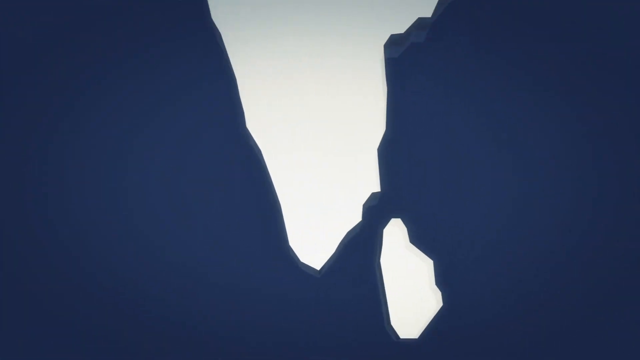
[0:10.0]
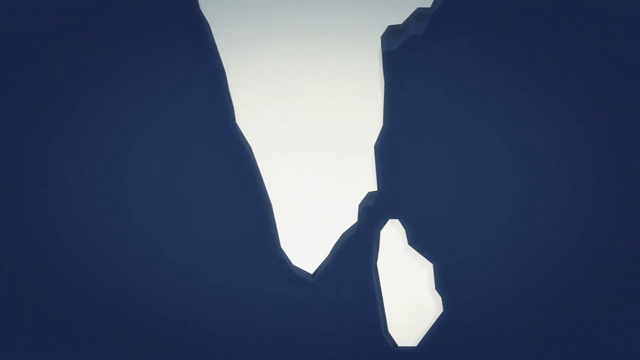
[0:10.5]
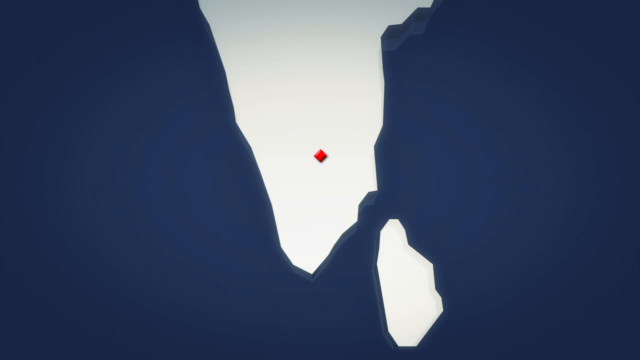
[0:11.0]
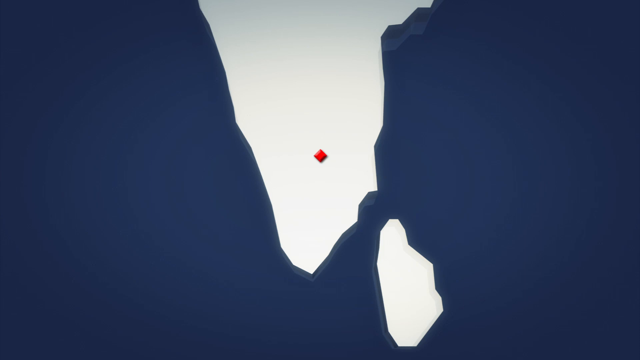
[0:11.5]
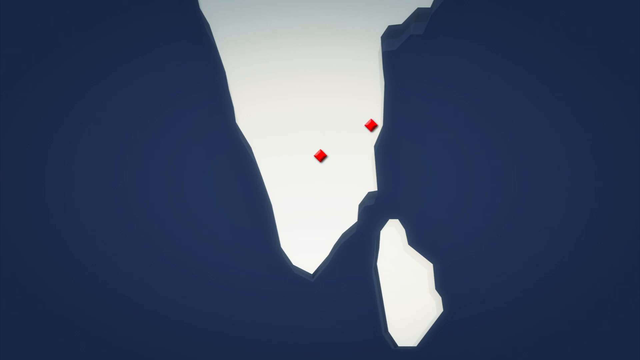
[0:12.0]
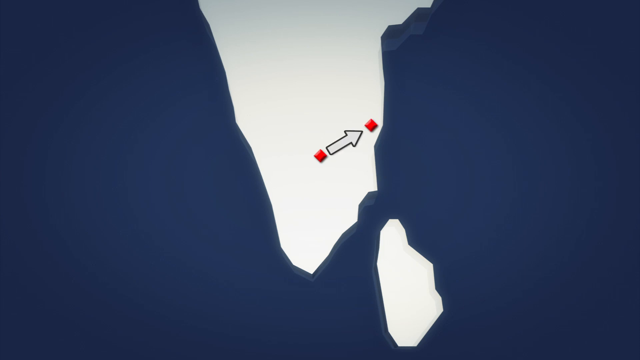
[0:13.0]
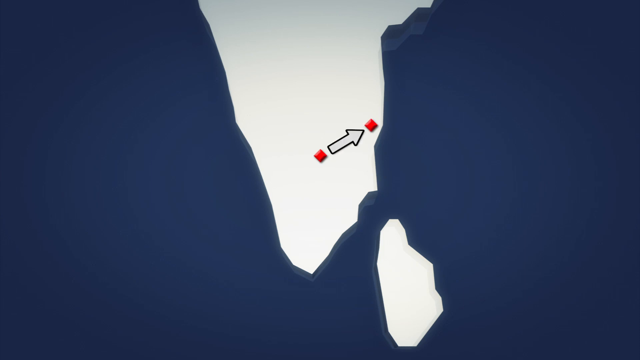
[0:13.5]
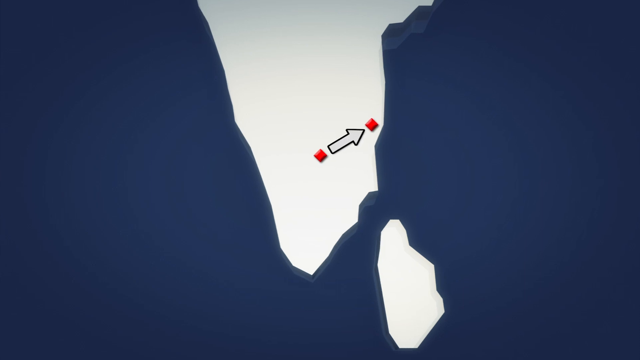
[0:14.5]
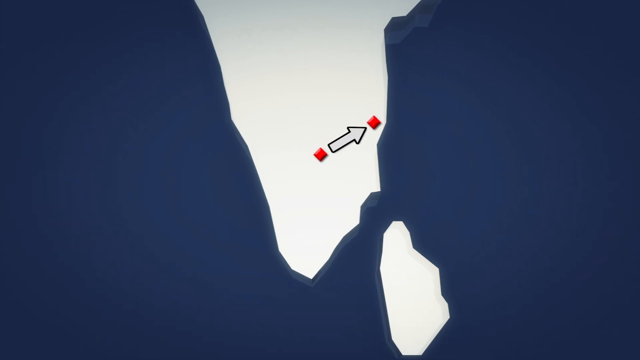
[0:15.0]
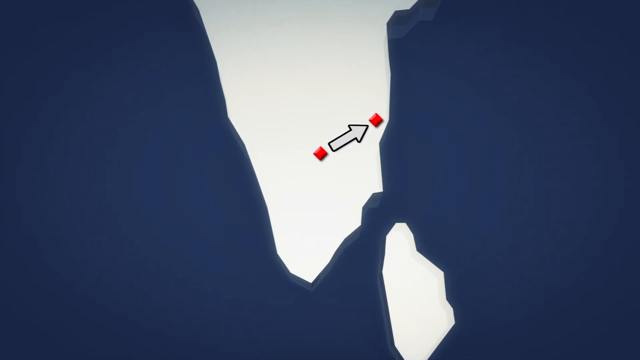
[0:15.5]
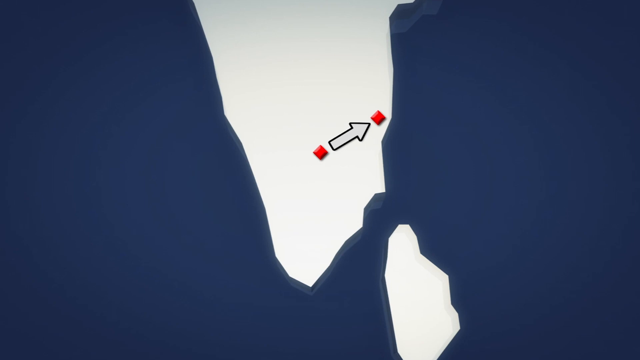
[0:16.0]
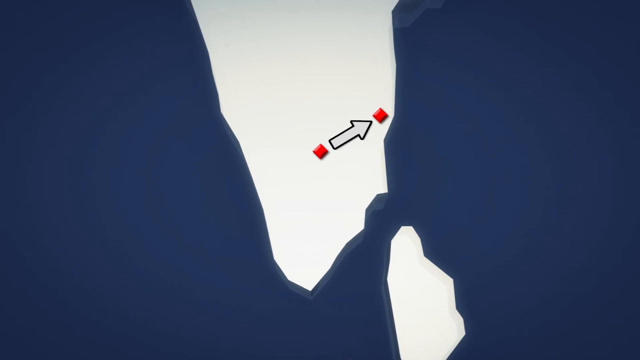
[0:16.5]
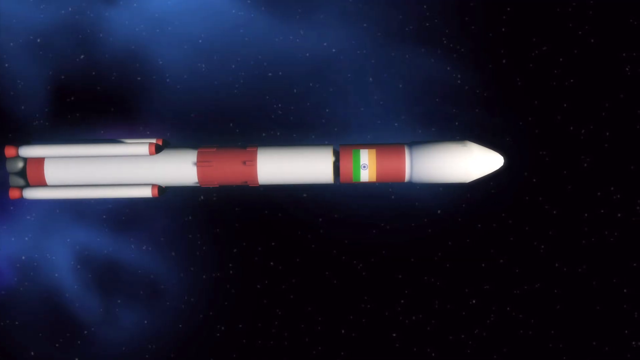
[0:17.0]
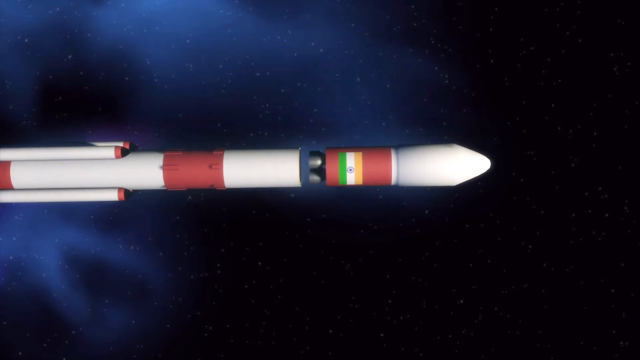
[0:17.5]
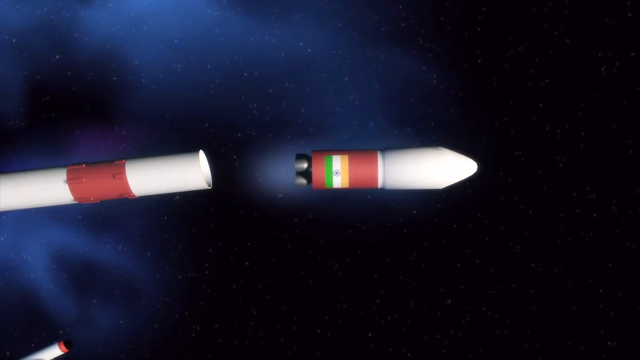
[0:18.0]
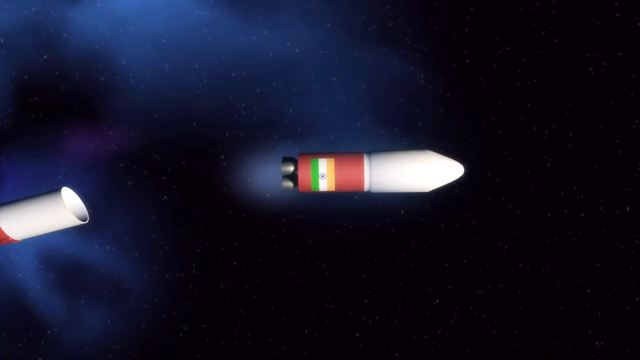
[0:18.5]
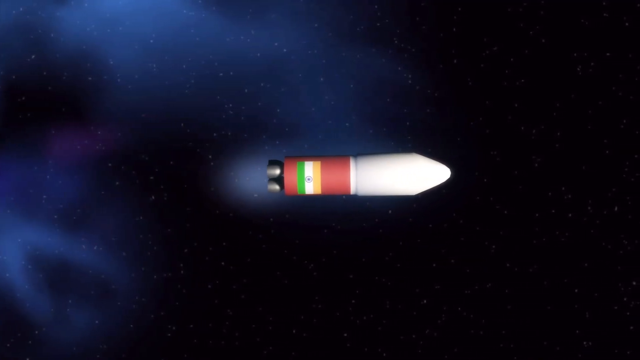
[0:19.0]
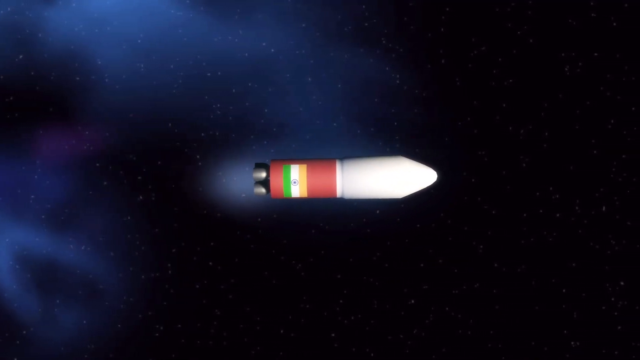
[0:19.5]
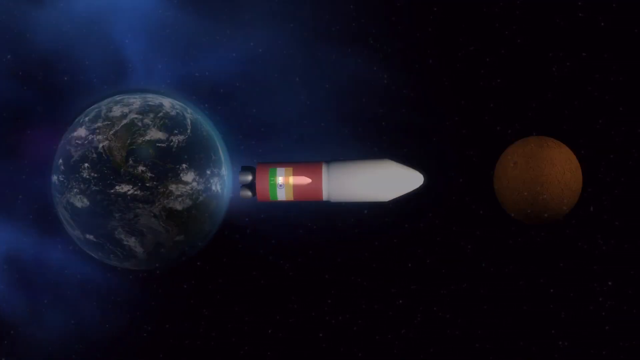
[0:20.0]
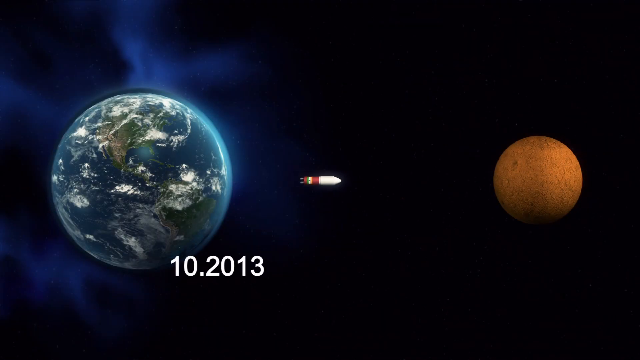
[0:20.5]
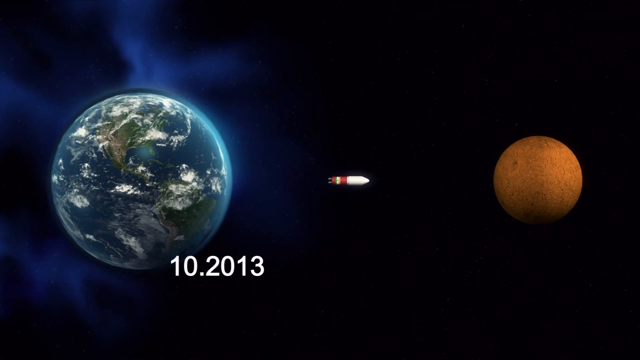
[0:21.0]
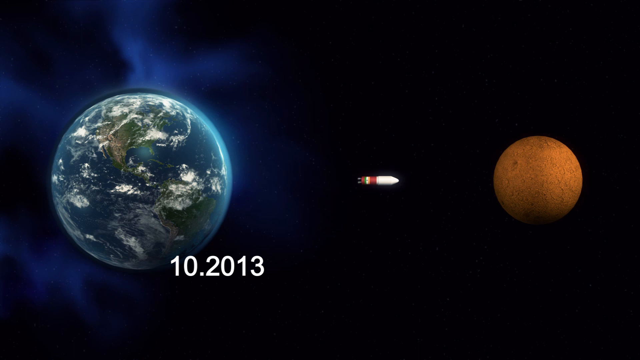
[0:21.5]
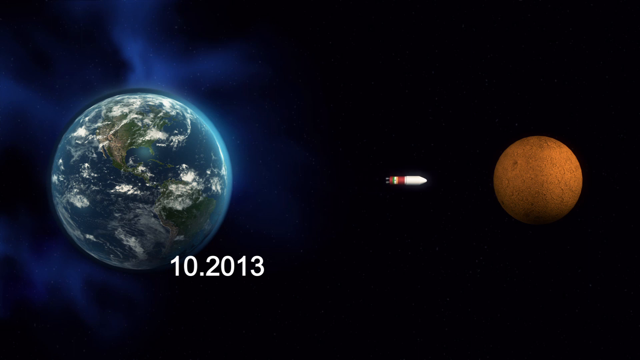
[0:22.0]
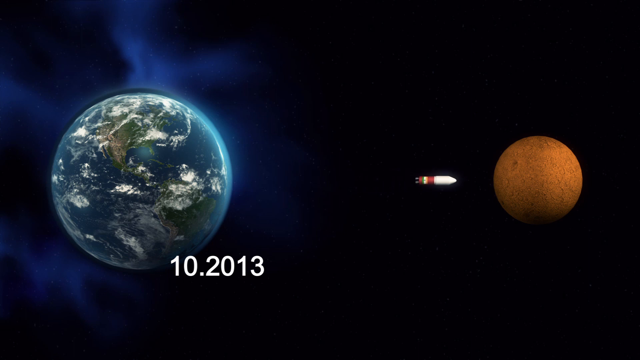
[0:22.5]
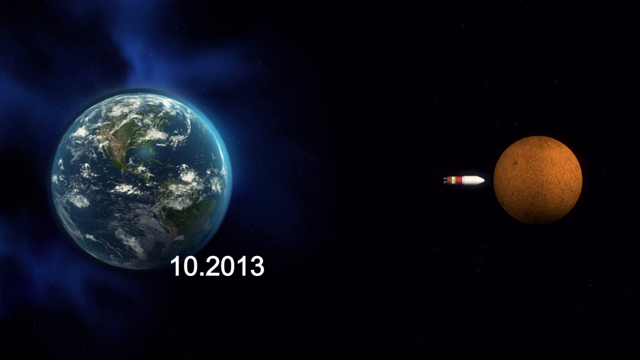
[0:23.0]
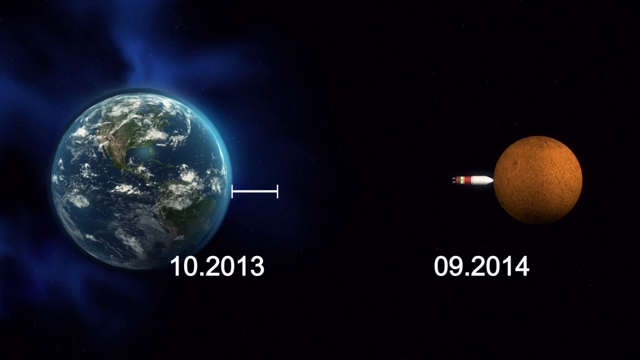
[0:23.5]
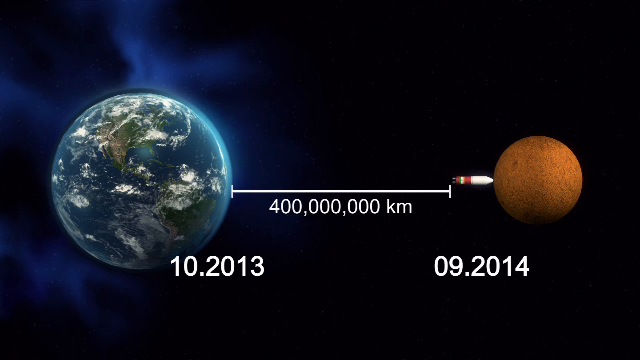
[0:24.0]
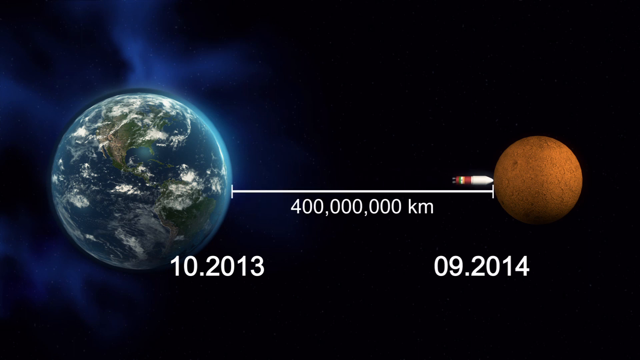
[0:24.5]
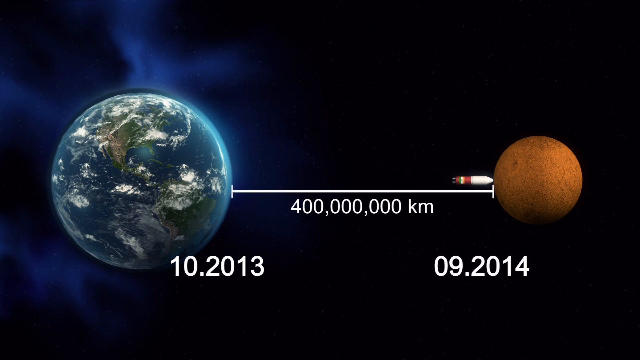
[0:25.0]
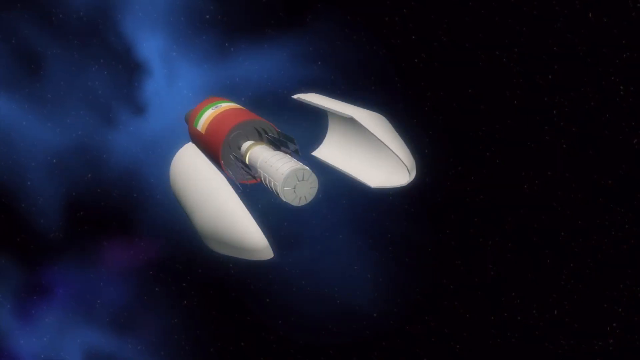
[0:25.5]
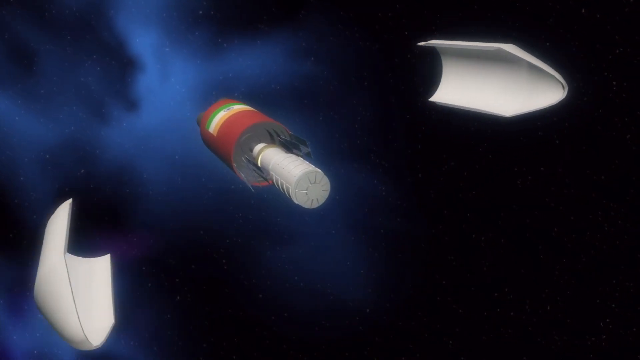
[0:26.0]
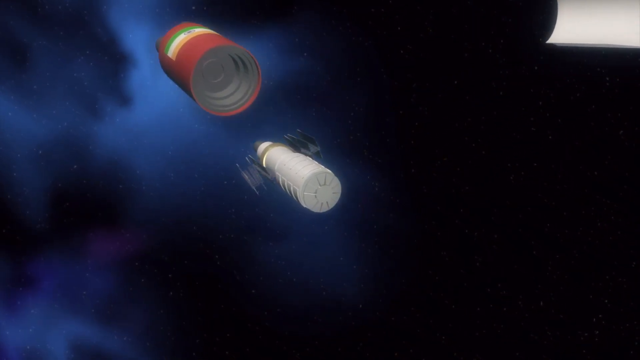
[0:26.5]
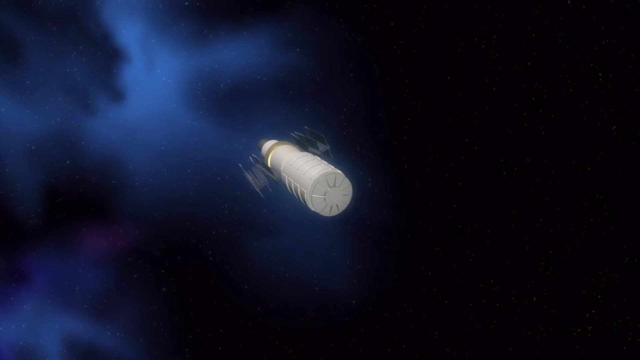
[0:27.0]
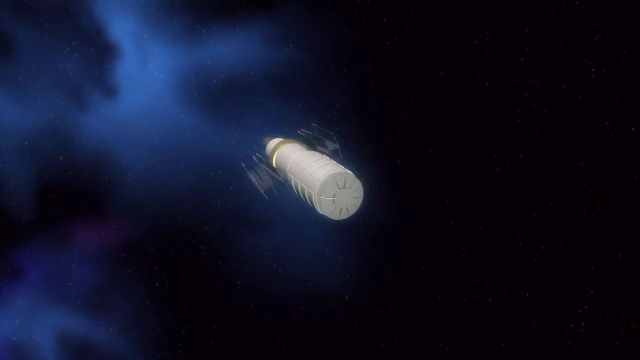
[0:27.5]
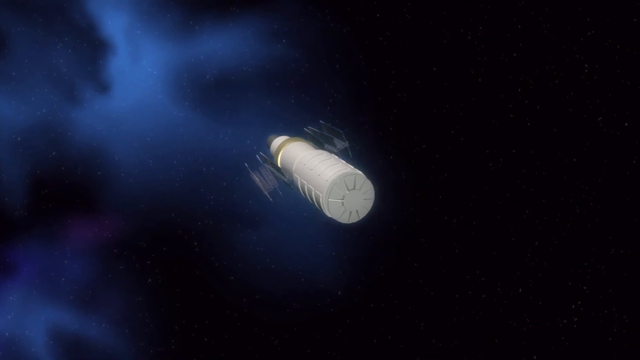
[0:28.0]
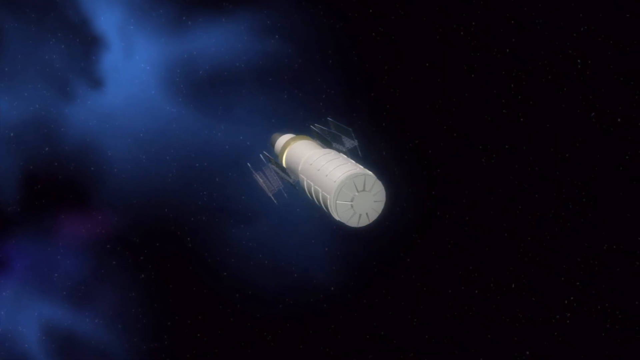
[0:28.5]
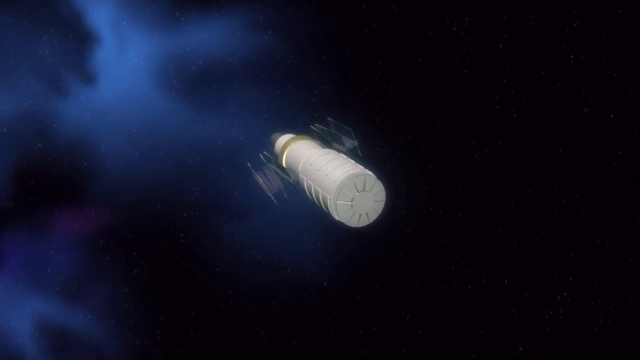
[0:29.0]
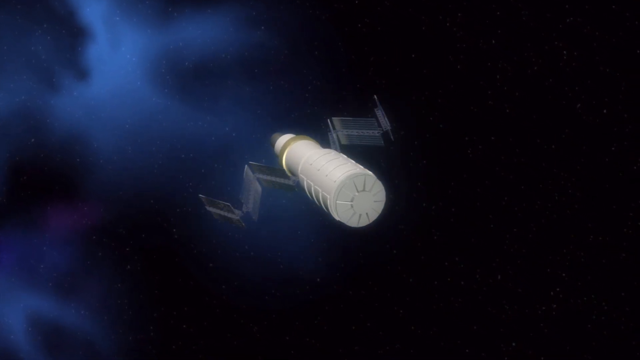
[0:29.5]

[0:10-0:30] The view kind of zooms in on the tip of a landmass. There are a couple of red diamond spots, and an arrow points diagonally between them near the top right one. Suddenly a missile appears at the side; the larger missile apparently lets go of some smaller ones while the pointed top part of the rocket is kept, and it looks like it has thrusters on the left side. The rocket travels from the earth, shown in a picture along with the numbers ten point twenty thirteen, with more illumination on the right side of the earth. The rocket heads toward an orange planet, possibly Mars, which is about a third or fourth the size of the earth, and the distance measured between them is 400 million kilometers. A silhouette forms around the glowing earth, with some smoky areas or clouds and speckles of stars. Next, a sheath is let go: the white parts on each side shoot off, almost like the inside of a soup can being released, leaving what looks like a satellite in orbit, shaped like a long cylinder. Suddenly its wings expand from the sides, almost spring-loaded, with panels that flatten out.